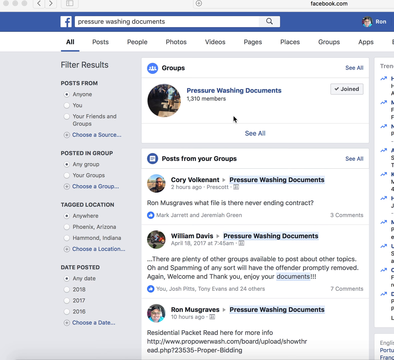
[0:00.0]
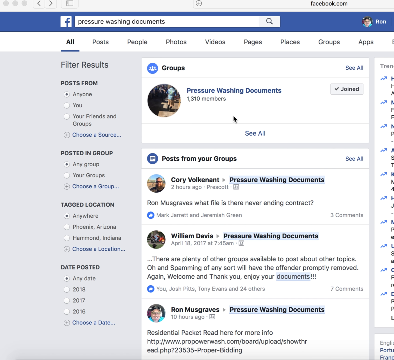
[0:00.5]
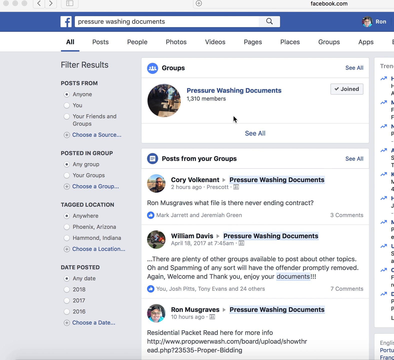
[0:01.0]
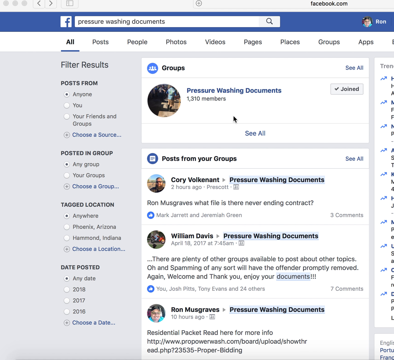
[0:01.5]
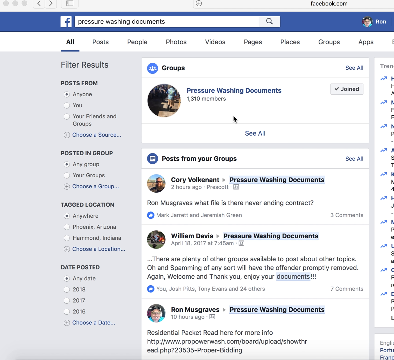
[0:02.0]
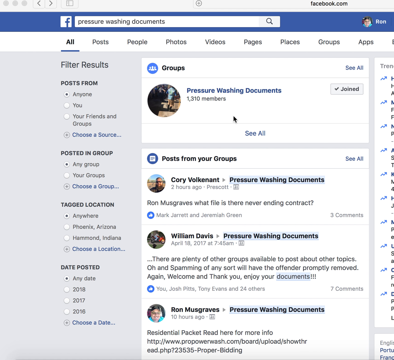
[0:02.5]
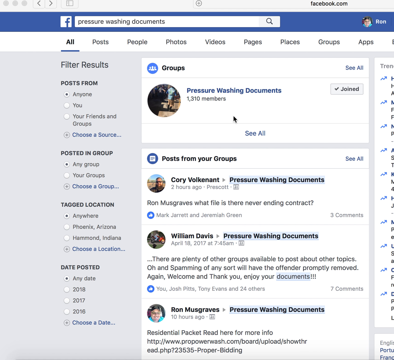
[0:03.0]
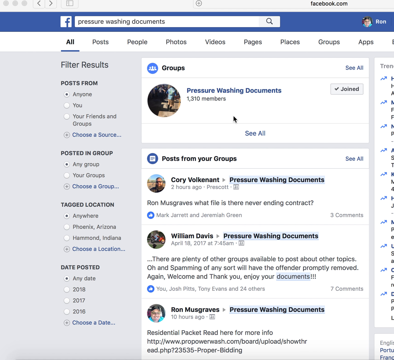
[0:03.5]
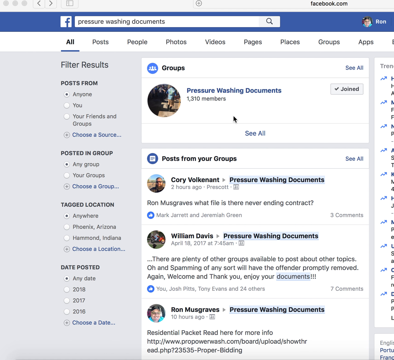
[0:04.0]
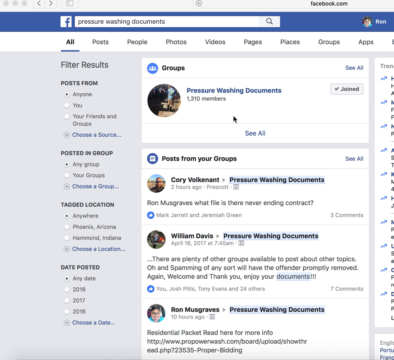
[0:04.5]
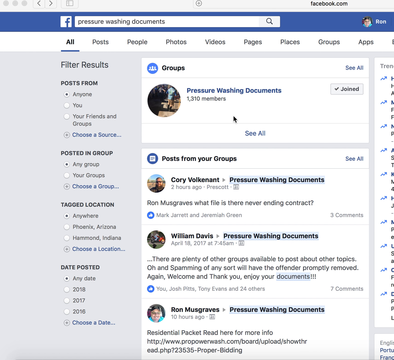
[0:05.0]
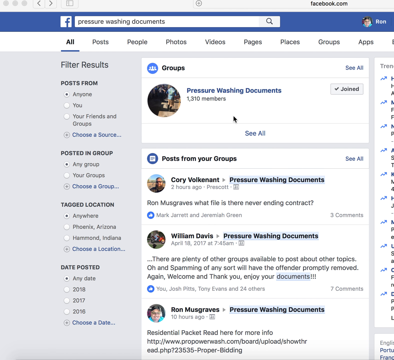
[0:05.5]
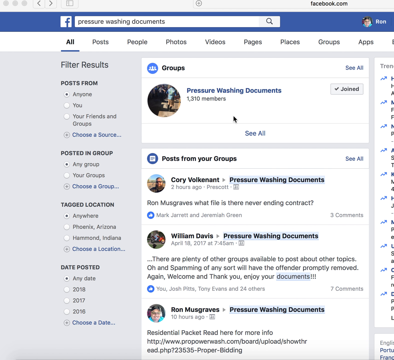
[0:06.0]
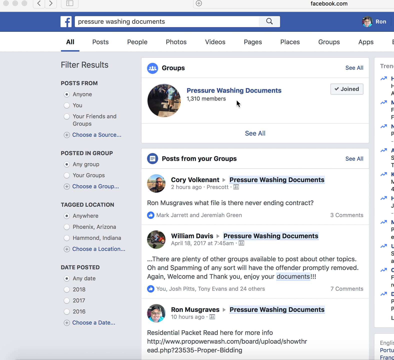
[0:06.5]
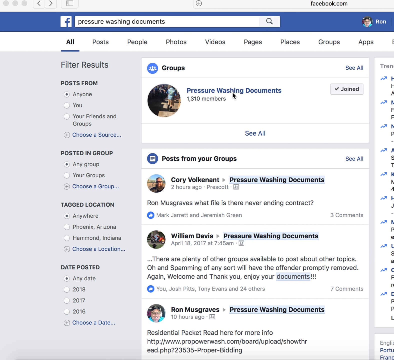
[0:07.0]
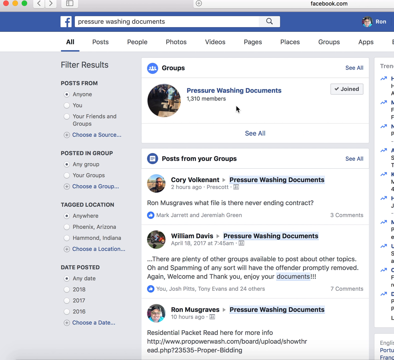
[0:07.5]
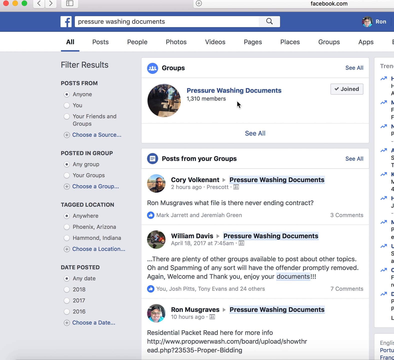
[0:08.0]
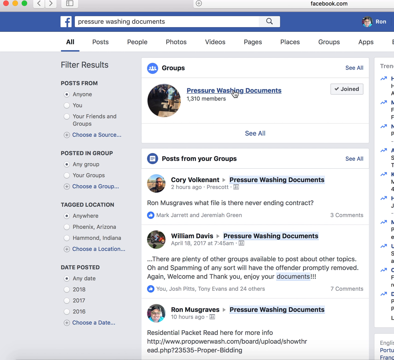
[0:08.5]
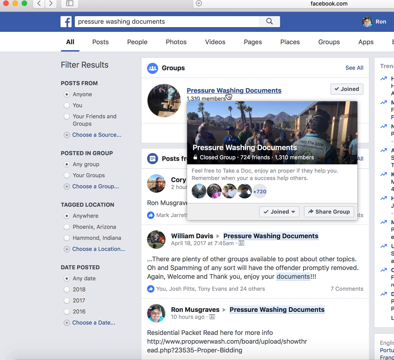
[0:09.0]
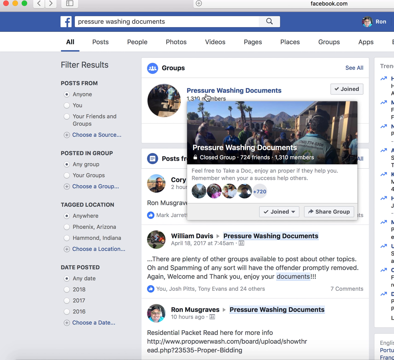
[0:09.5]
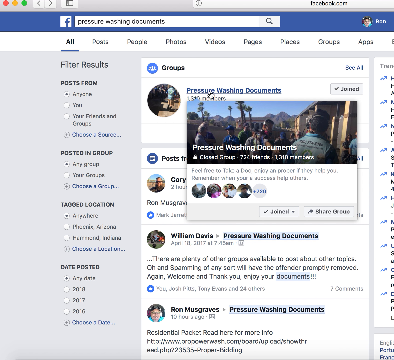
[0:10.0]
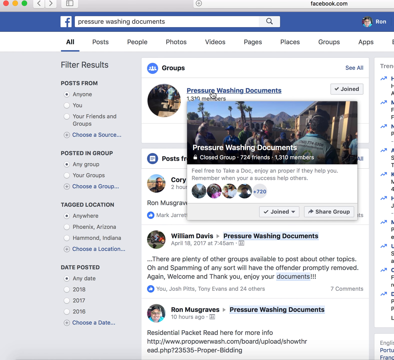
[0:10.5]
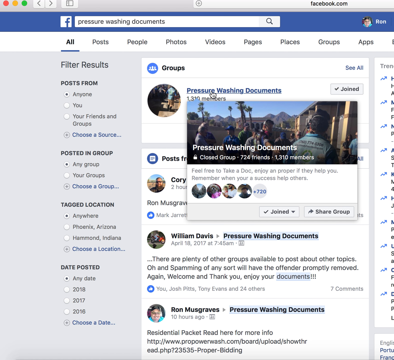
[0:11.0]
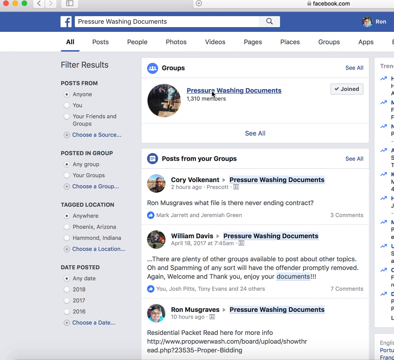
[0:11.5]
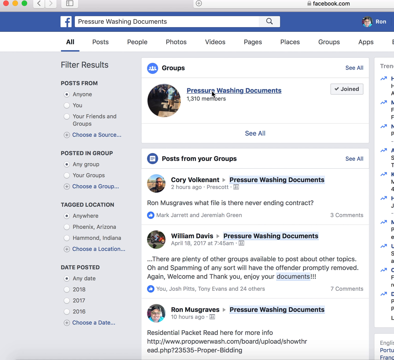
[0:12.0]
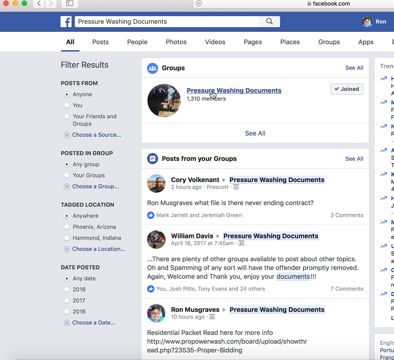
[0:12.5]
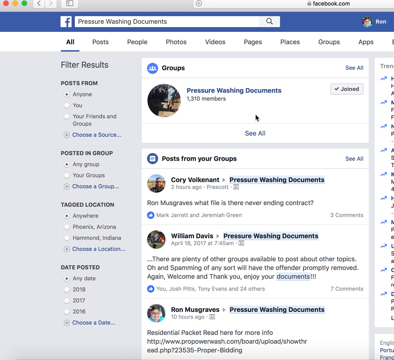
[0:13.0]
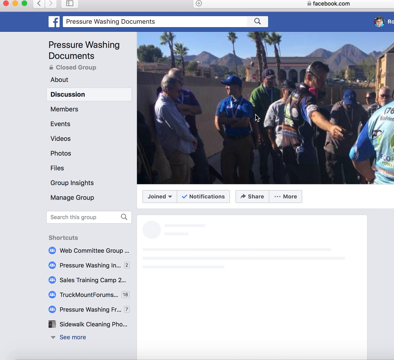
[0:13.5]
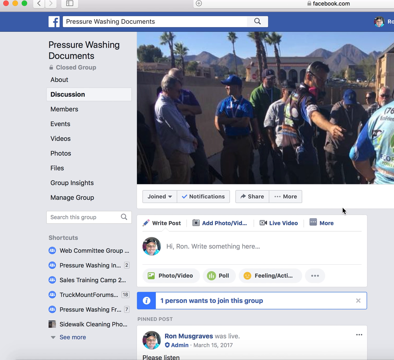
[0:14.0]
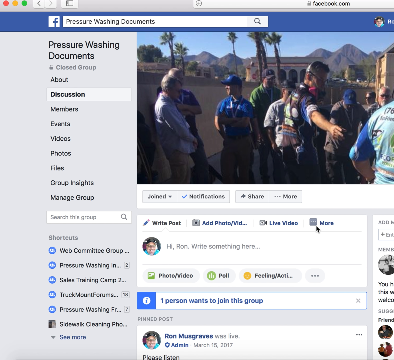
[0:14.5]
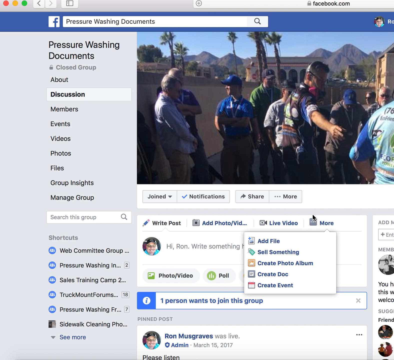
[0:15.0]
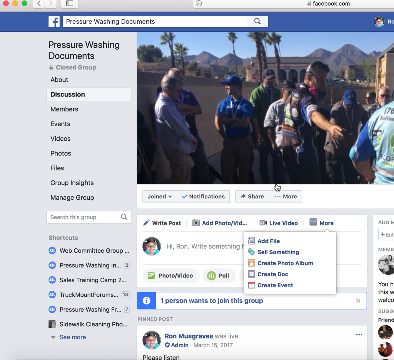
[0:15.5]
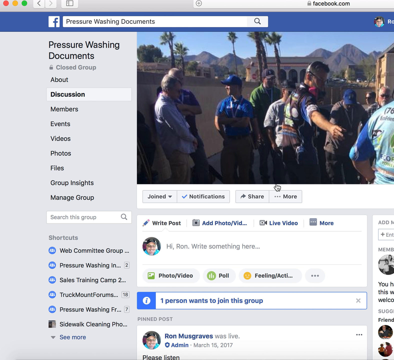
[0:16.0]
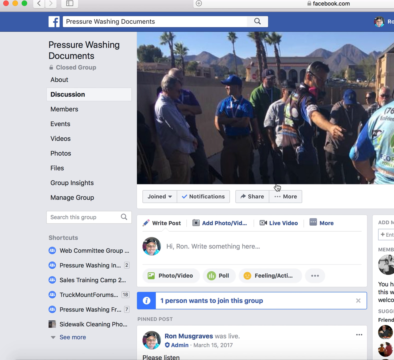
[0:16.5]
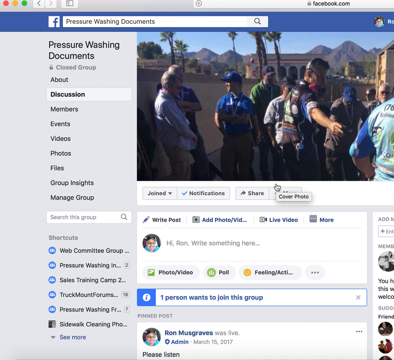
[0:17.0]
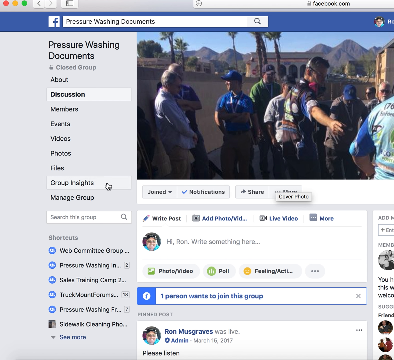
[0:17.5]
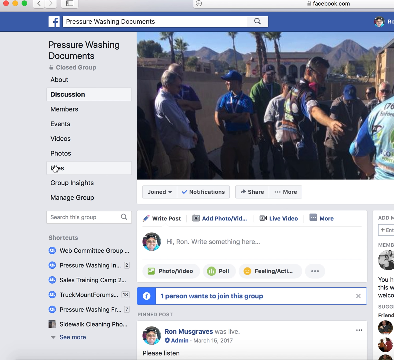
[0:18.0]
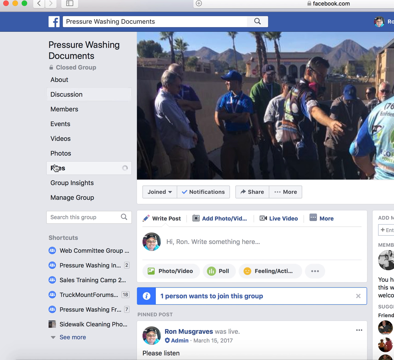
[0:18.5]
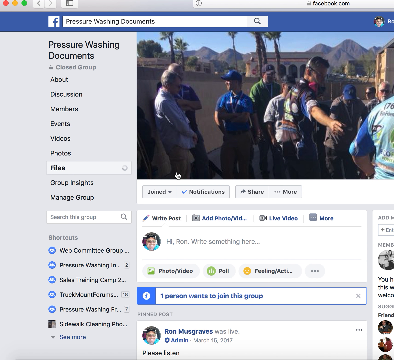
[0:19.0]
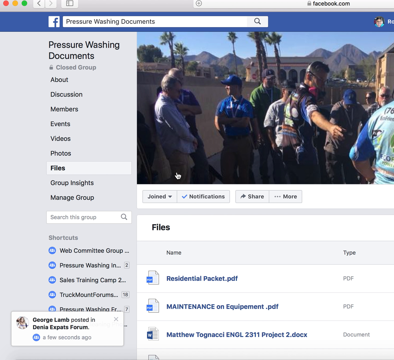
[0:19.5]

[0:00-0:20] A Facebook page shows a pressure washing documents group that looks like it has 1,310 members. Below that are posts from your groups, including various posts from the pressure washing documents group. A black mouse icon is at the very top of the page; it moves and clicks on pressure washing documents, which brings up the group's page itself. At the top of the page is a picture of various men standing outside in a desert climate, with a wall around them and mountains and palm trees behind them, suggesting a drier climate. The mouse clicks on more, then goes over to files, bringing up a list of various files that appears toward the bottom of the screen.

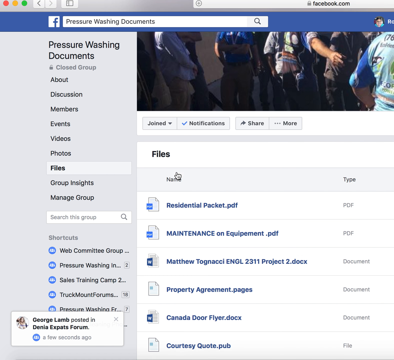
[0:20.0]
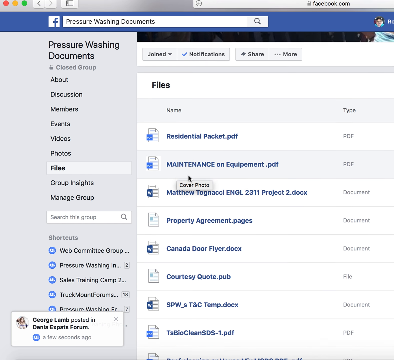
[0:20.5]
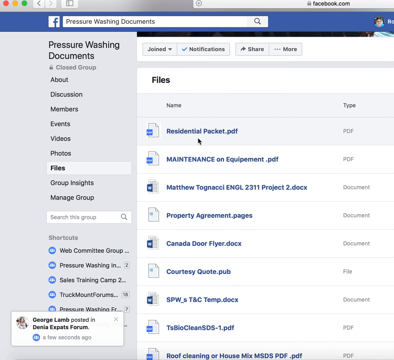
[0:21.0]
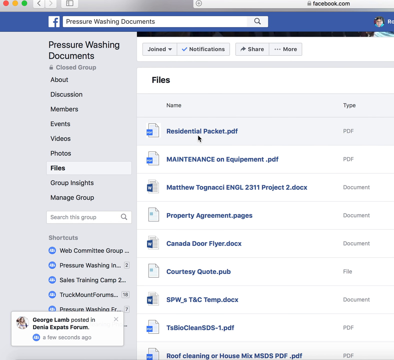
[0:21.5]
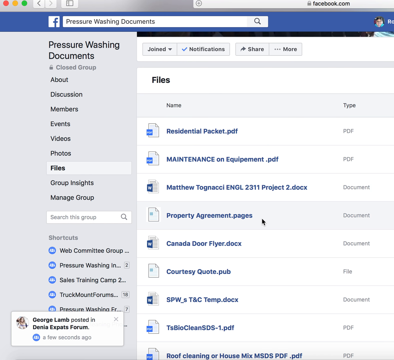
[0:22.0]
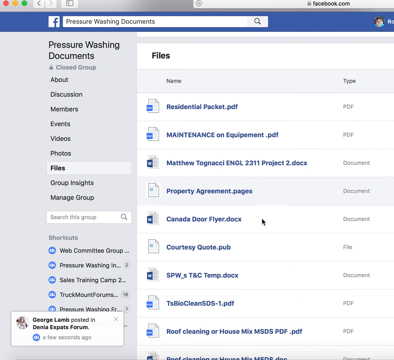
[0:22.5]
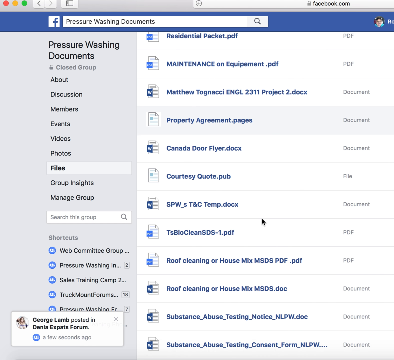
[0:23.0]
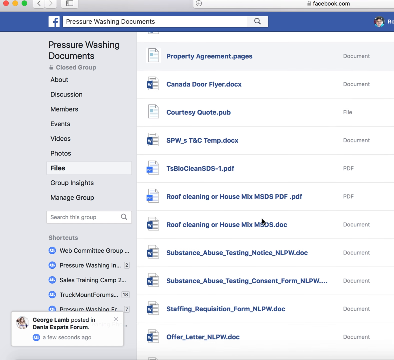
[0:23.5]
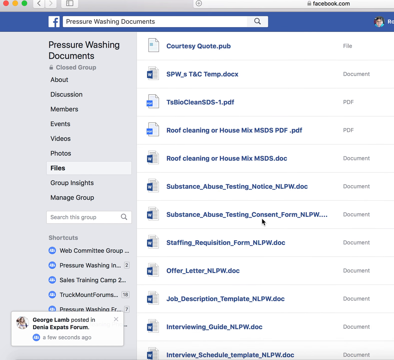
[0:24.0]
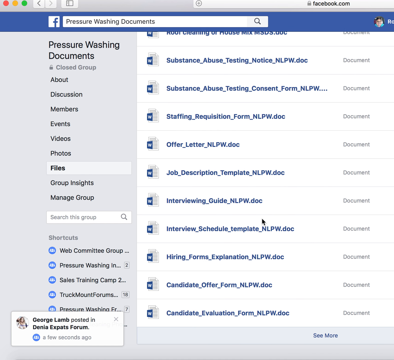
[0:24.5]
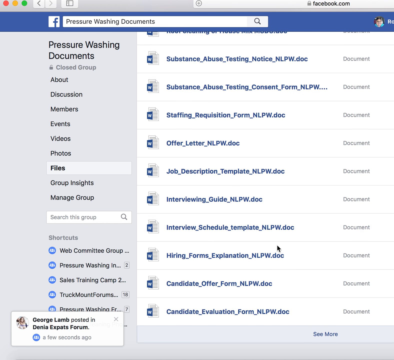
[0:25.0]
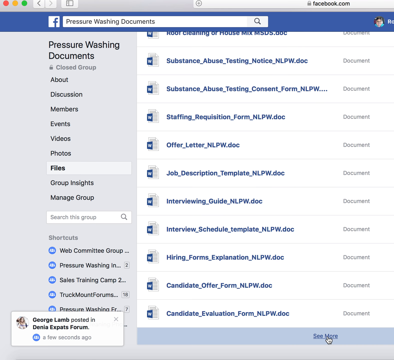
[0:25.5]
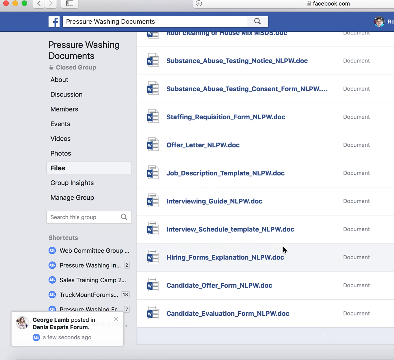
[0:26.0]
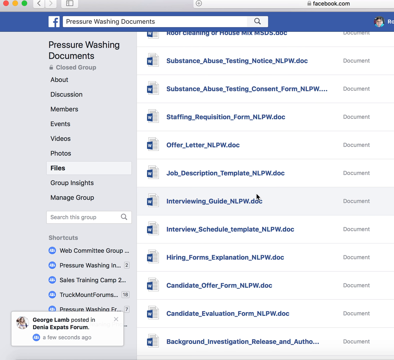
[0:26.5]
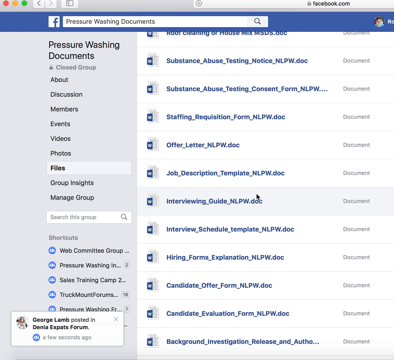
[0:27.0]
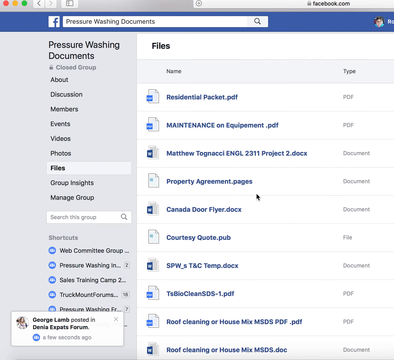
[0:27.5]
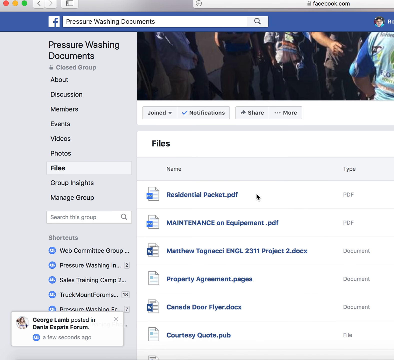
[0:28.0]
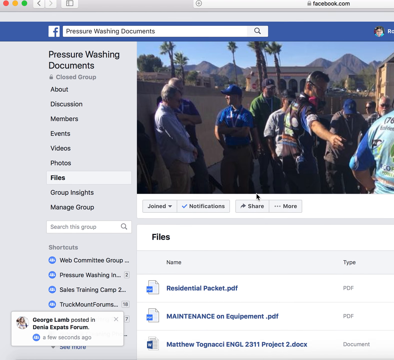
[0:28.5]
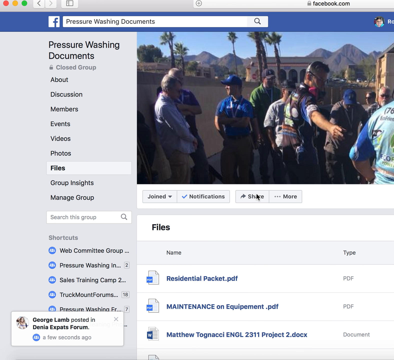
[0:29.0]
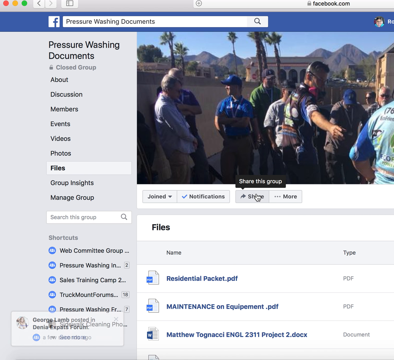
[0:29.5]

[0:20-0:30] A Facebook page reads "pressure washing documents," which is also in the search bar, and the screen says "files" for that page. An image at the top of the page shows people whose heads are cut off so only their bodies are visible, with one man's arm reaching out. The listed files include "residential packet.pdf," "maintenance on equipment.pdf," a document with the name of a man named Michael or Matthew, a property agreement pages document, and a Canada door flyer document. At the bottom, it says someone named George Lamb posted in a forum. The mouse scrolls down to show more documents, such as office letter, job description, interviewing guide, interviewing schedule, templates, and hiring form explanation, then scrolls back up, moving back and forth through the various documents.